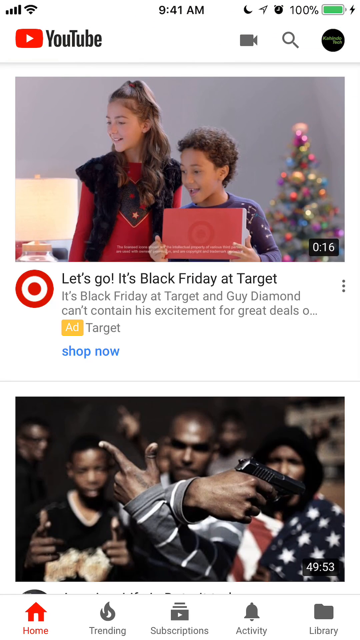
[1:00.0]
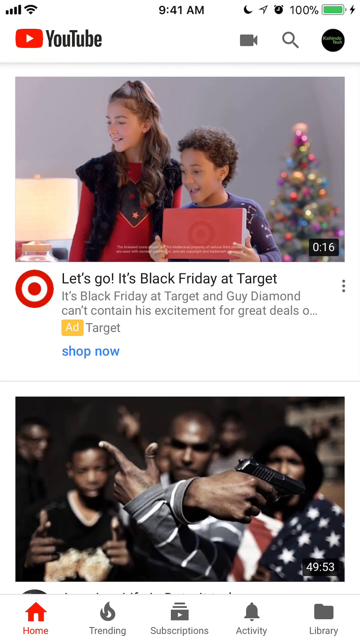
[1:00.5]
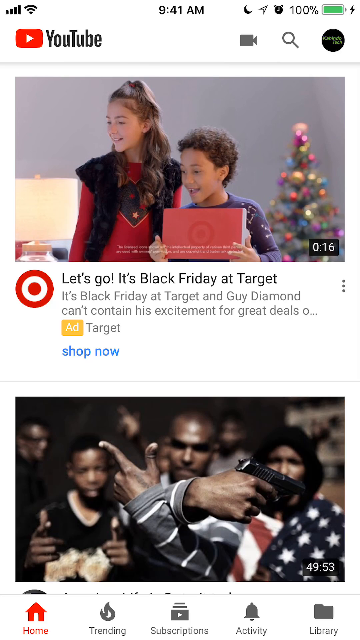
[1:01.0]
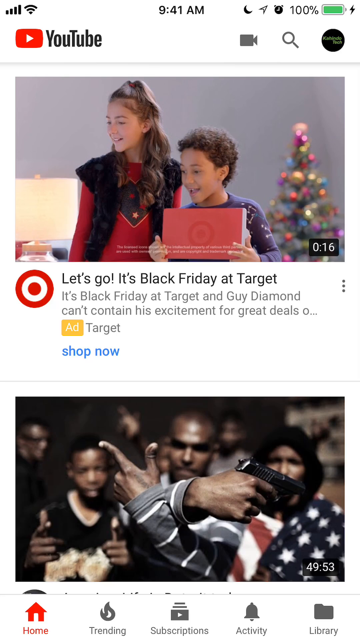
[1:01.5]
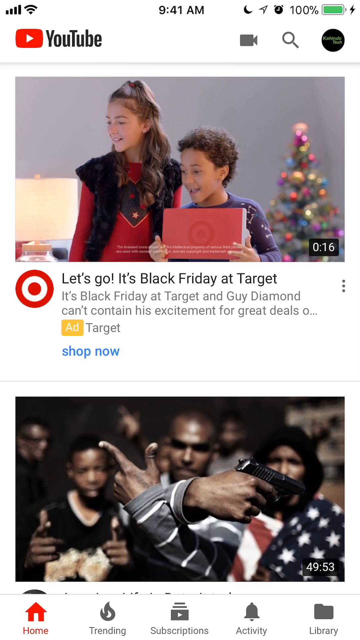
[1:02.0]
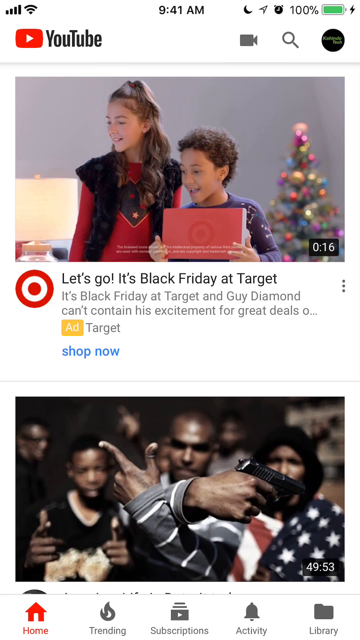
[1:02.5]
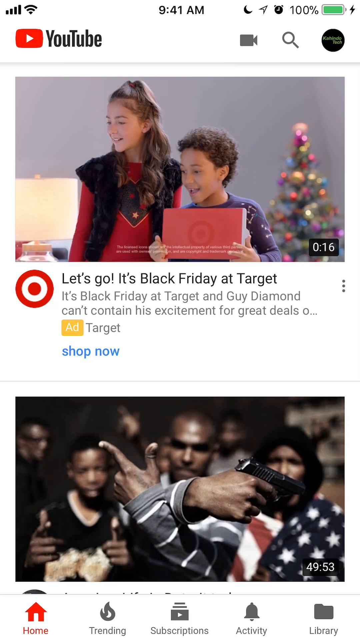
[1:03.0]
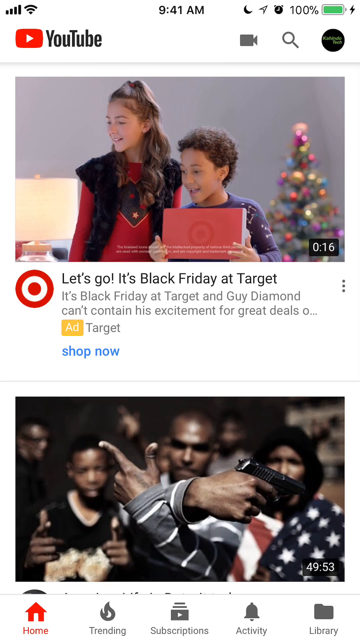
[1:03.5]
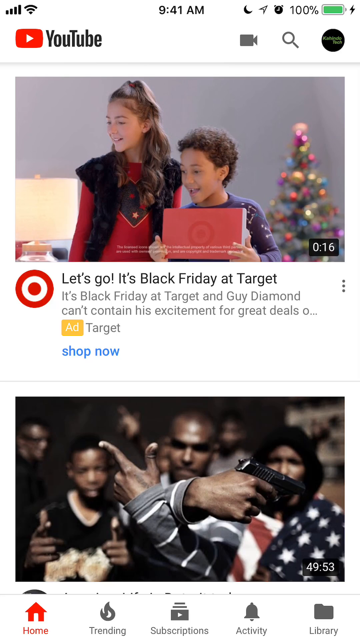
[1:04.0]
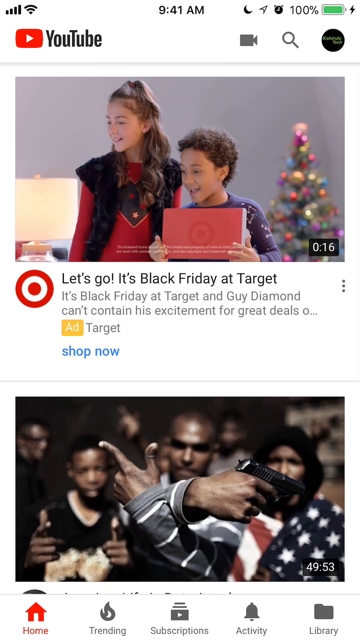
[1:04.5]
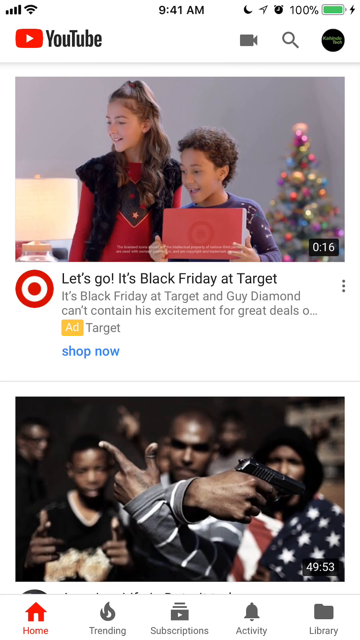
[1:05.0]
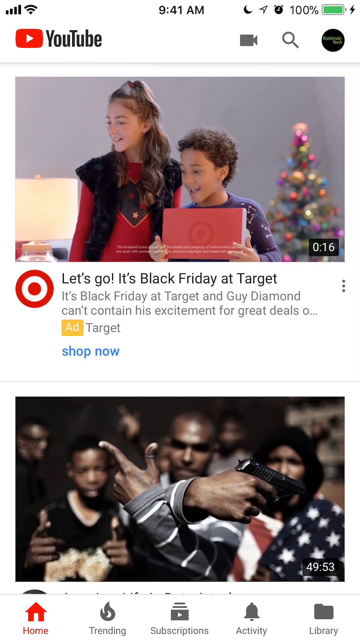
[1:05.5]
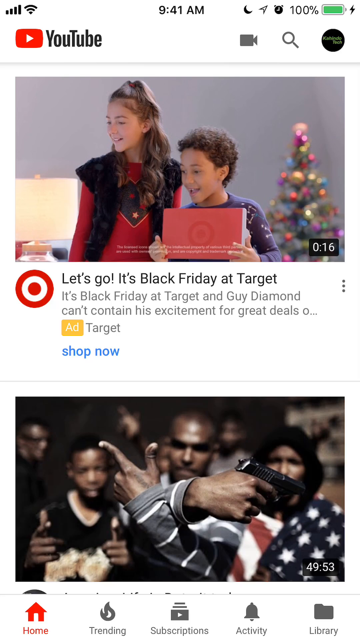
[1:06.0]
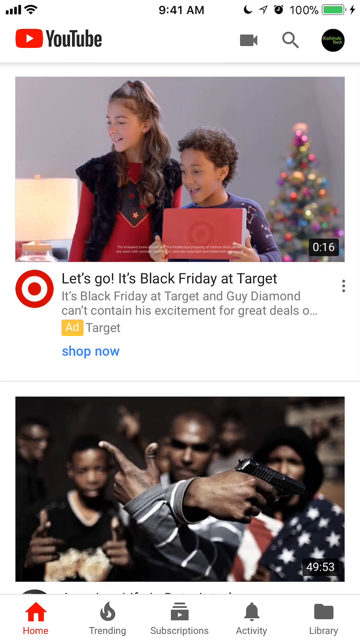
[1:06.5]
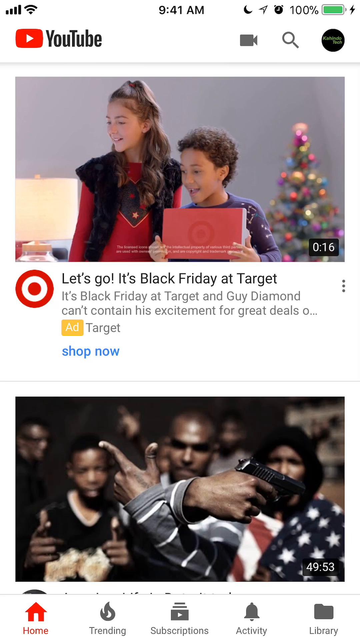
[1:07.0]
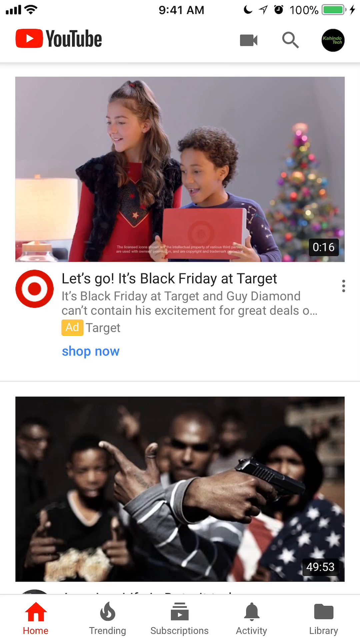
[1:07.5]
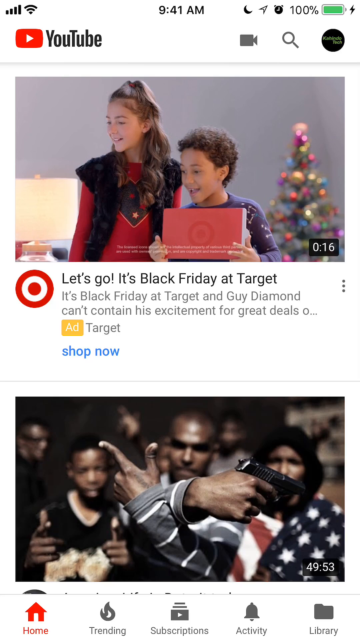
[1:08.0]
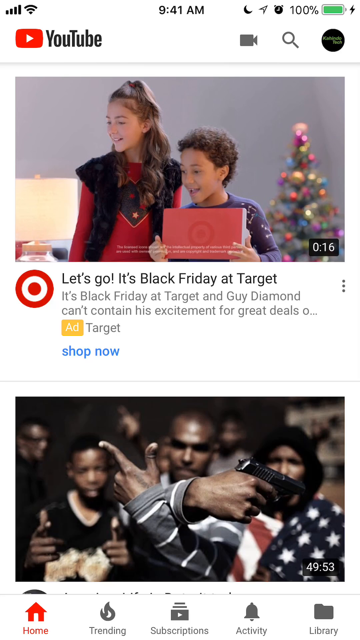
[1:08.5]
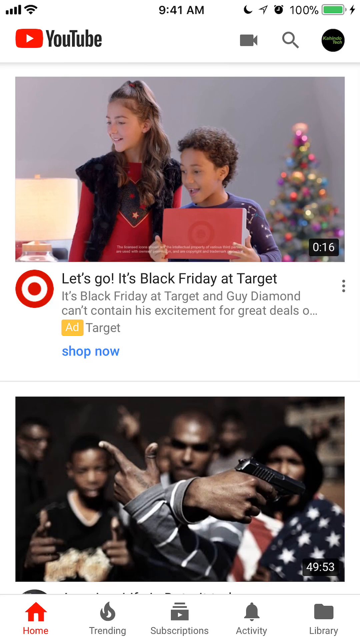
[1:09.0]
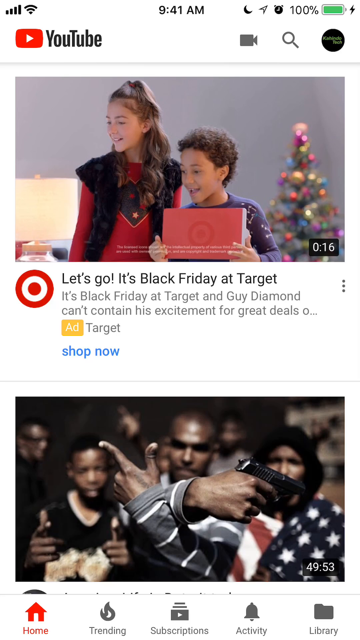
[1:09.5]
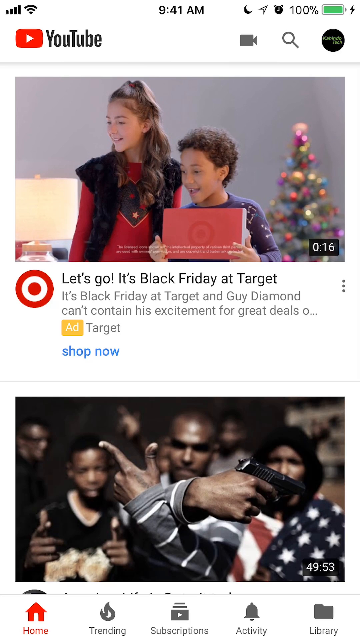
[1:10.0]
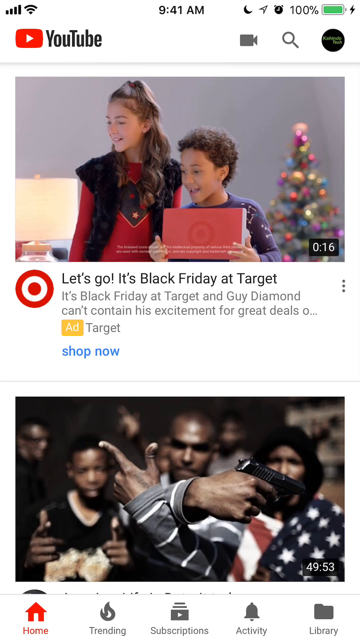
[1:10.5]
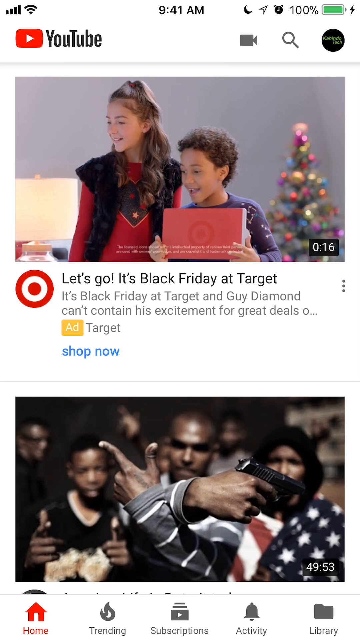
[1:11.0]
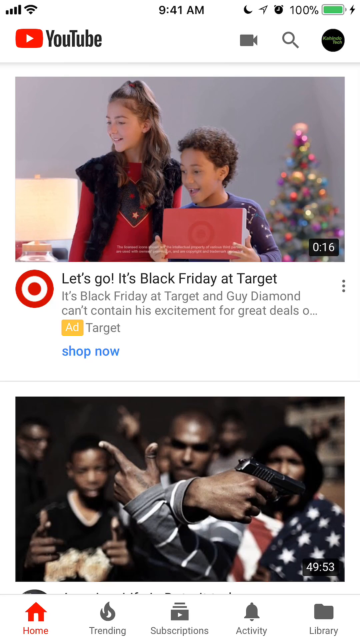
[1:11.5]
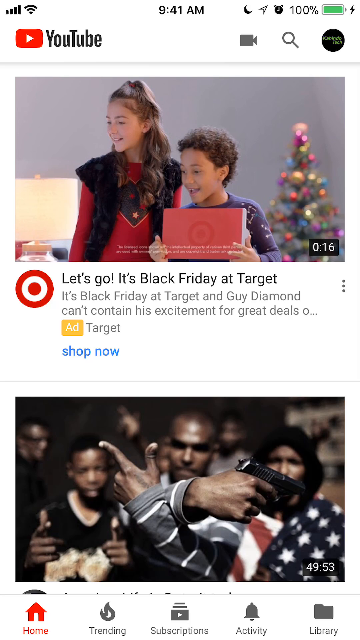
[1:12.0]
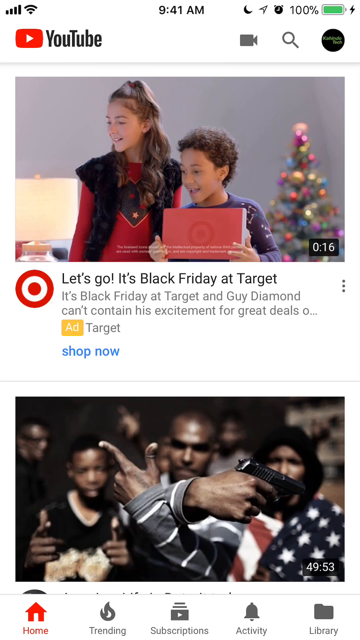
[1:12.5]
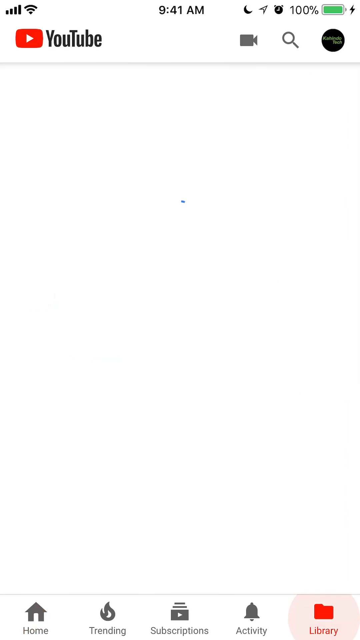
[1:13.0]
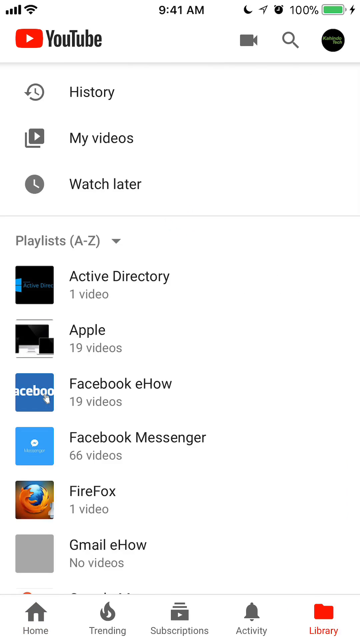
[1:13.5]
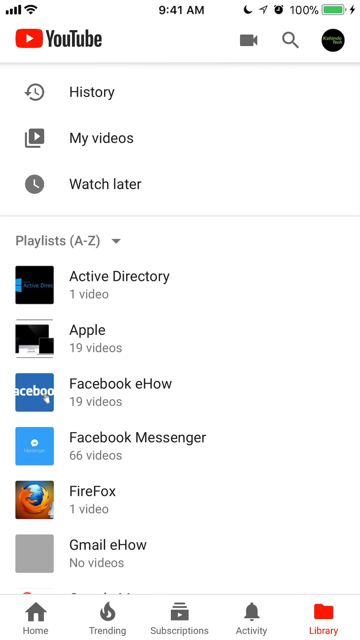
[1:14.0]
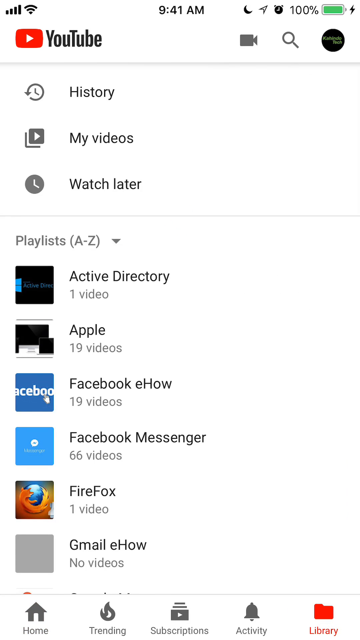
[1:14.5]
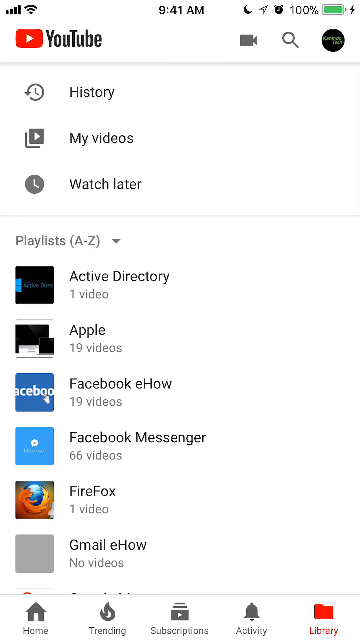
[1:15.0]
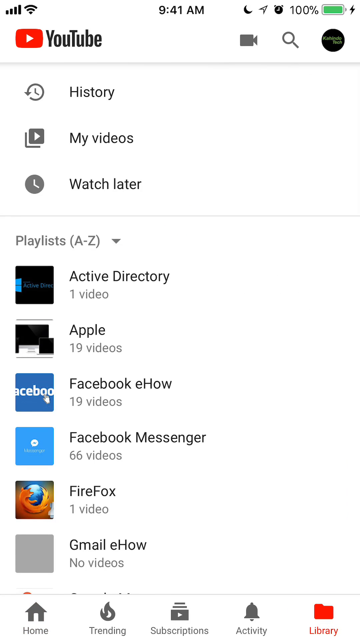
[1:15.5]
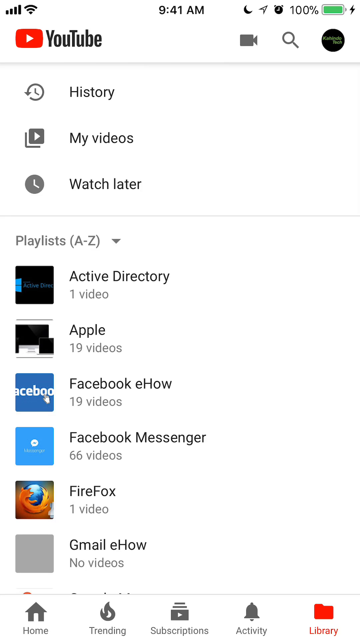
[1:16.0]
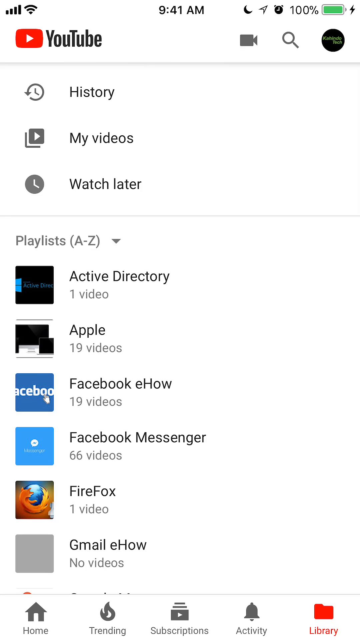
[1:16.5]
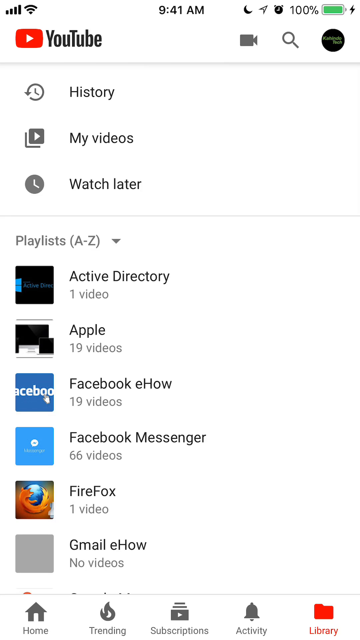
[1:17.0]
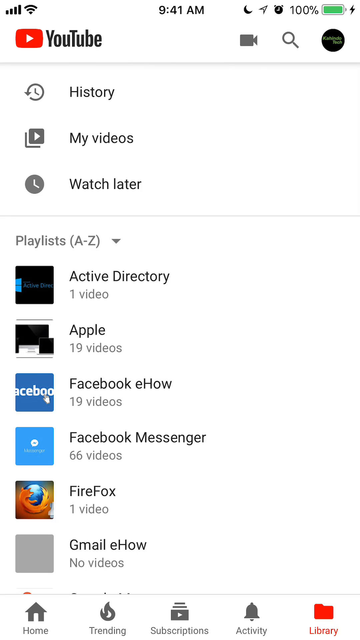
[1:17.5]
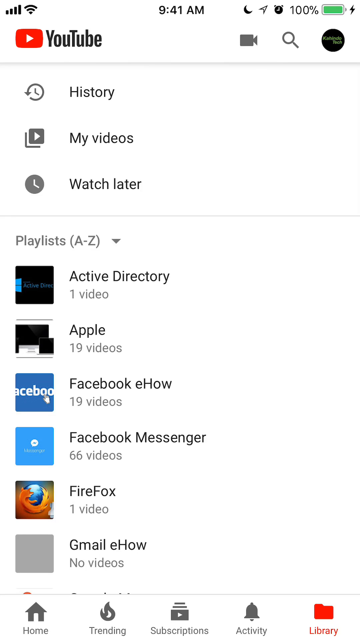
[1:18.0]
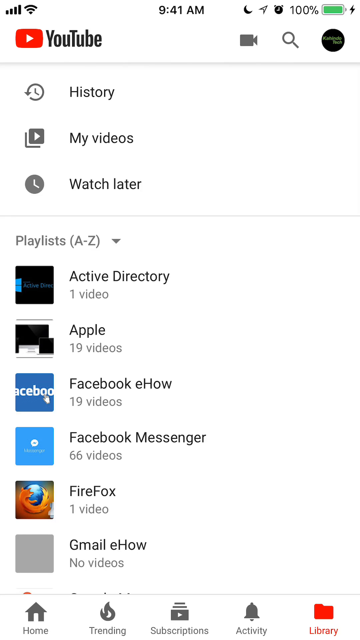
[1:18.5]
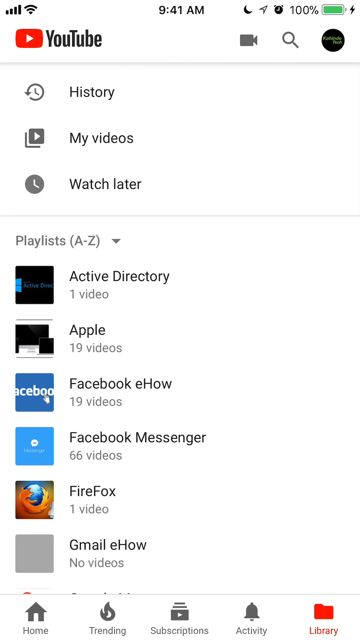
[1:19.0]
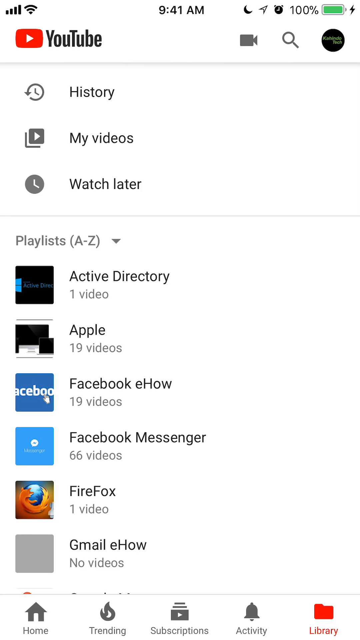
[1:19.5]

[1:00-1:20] The YouTube app is open on a smartphone. At the top of the screen is a 16-second ad for Target, with the Target logo on the left and, to the right of it, the text "Let's go, it's Black Friday at Target." Below that it says "It's Black Friday at Target, and Guy Diamond can't contain his excitement for great deals." There is an ad banner that says "Target" and a blue button that says "Shop Now". Below that is a video that could be played; its title is not visible, but the thumbnail makes it look possibly like some type of rap video, showing a man with a bunch of other people behind him, standing in poses. The phone has a 100% battery charge, the time reads 9:41 a.m., and it appears to have a cell signal and a Wi-Fi signal. The screen then changes to the YouTube menu, which has the History and My Videos buttons, among others.